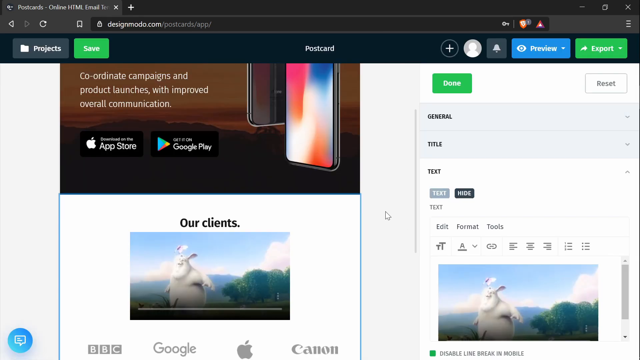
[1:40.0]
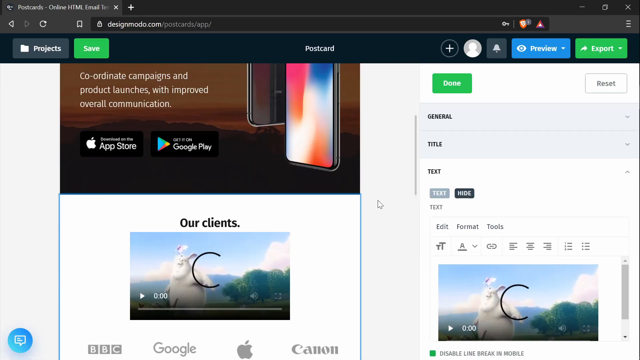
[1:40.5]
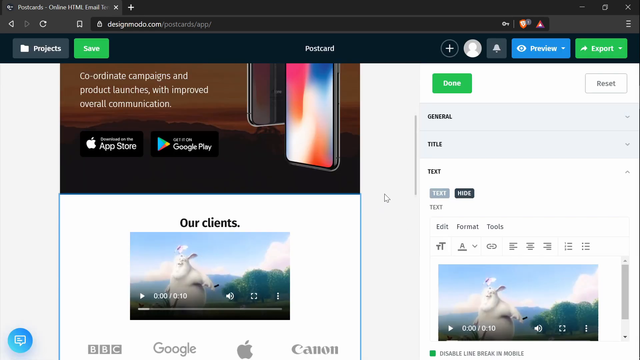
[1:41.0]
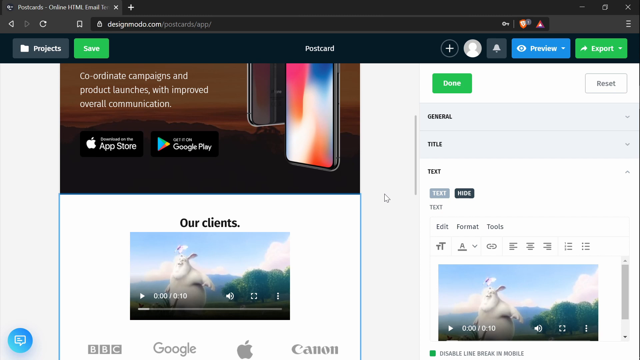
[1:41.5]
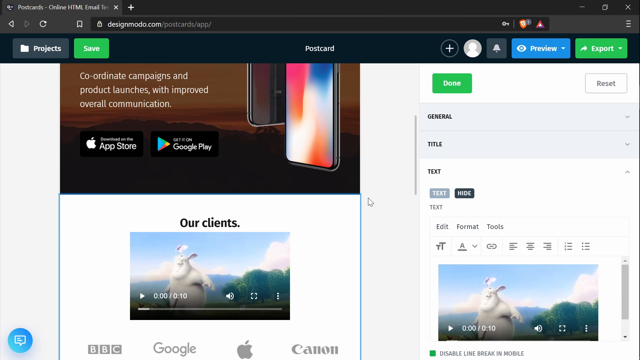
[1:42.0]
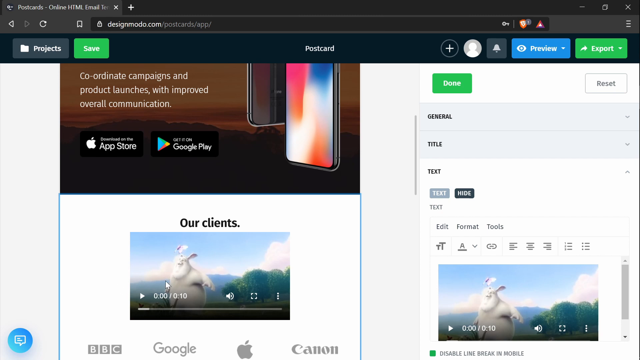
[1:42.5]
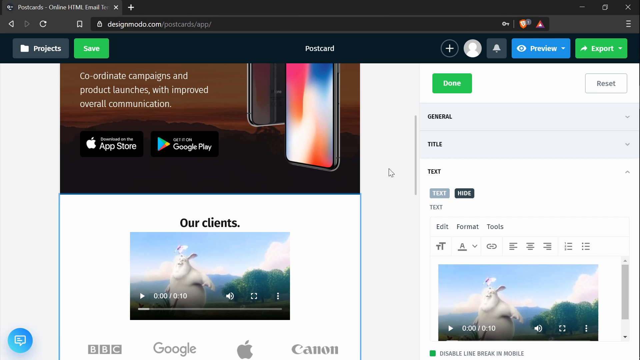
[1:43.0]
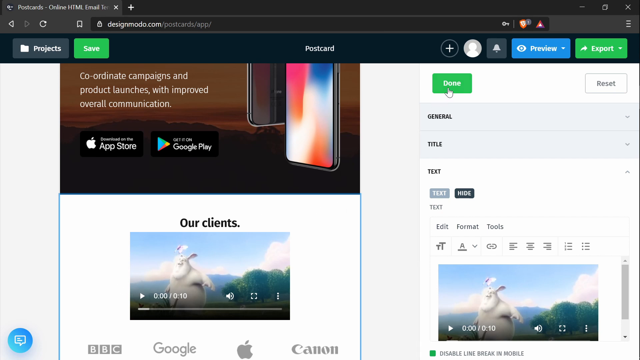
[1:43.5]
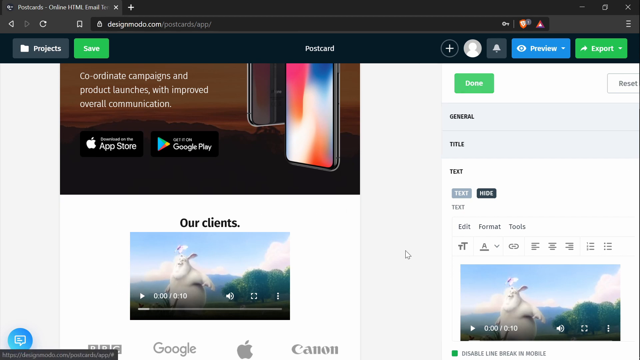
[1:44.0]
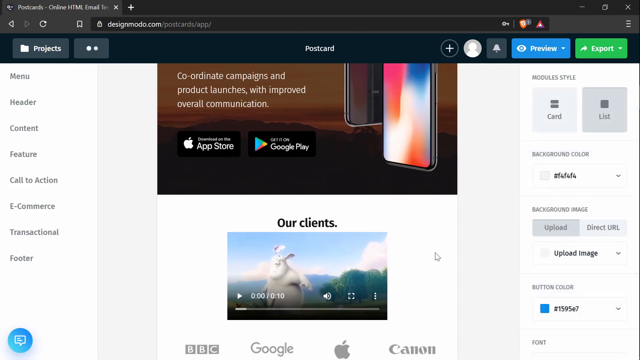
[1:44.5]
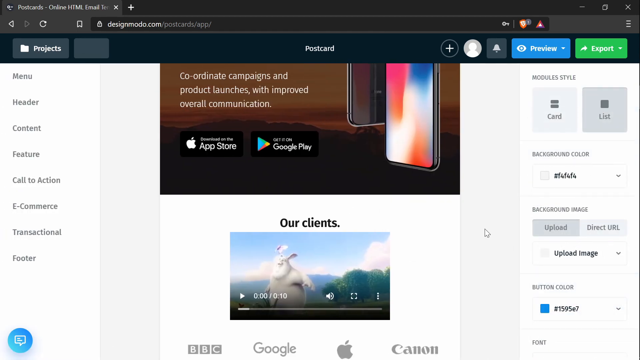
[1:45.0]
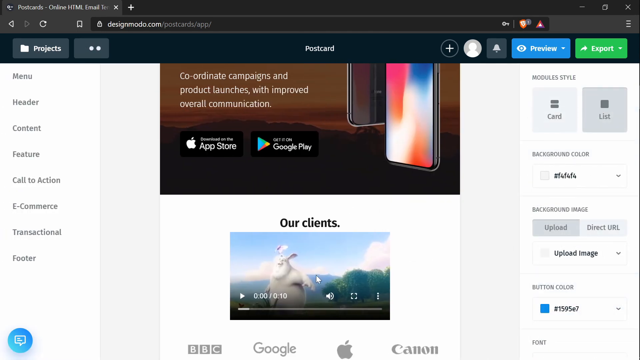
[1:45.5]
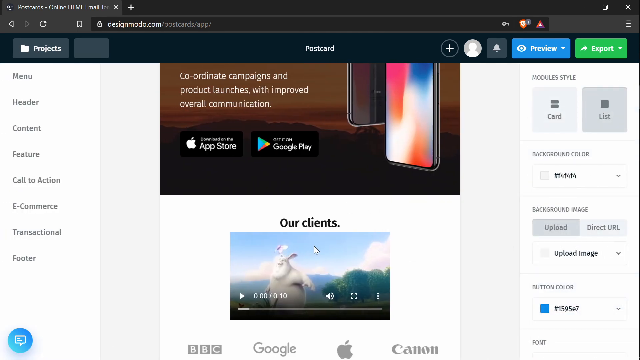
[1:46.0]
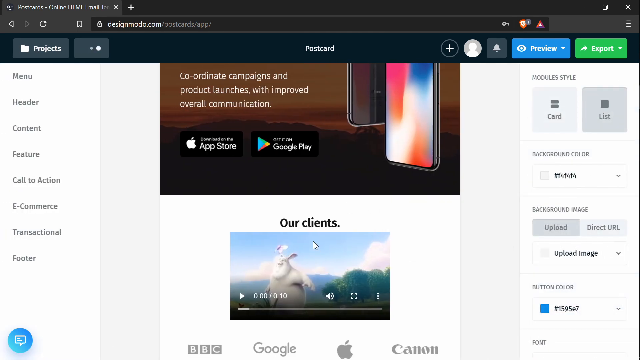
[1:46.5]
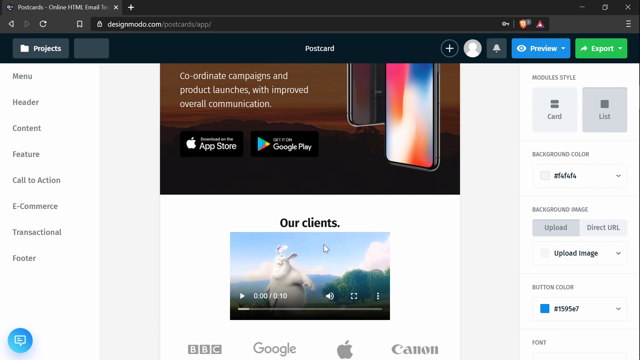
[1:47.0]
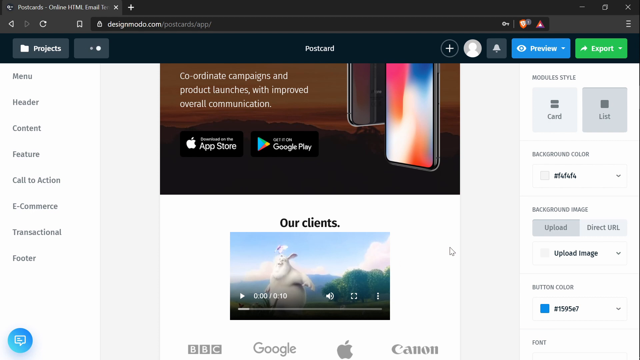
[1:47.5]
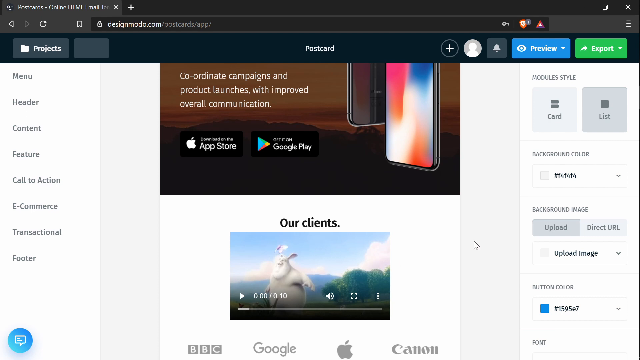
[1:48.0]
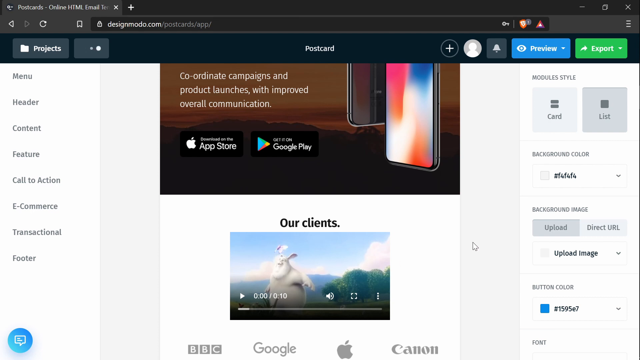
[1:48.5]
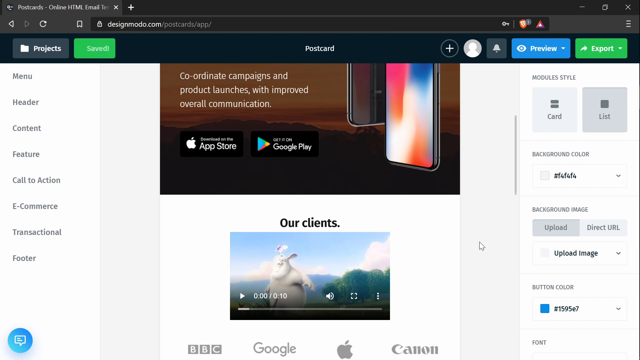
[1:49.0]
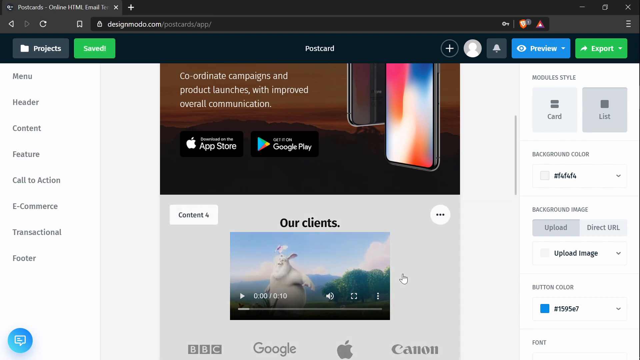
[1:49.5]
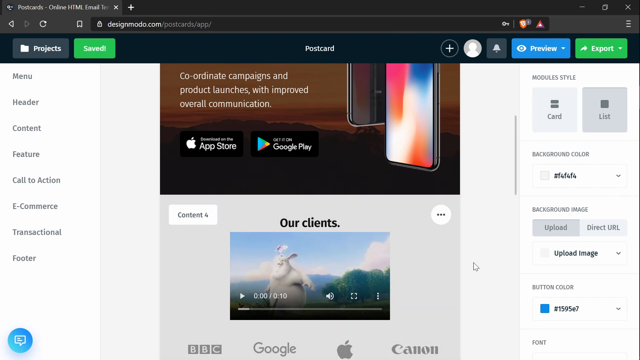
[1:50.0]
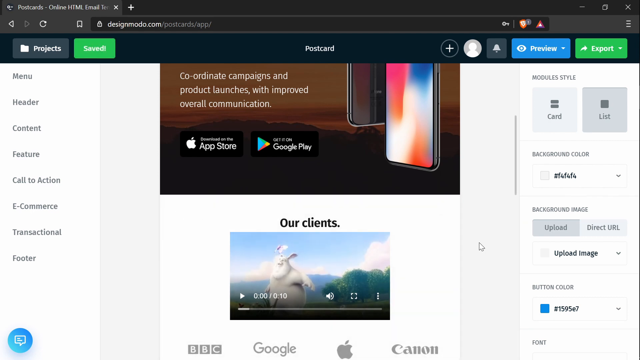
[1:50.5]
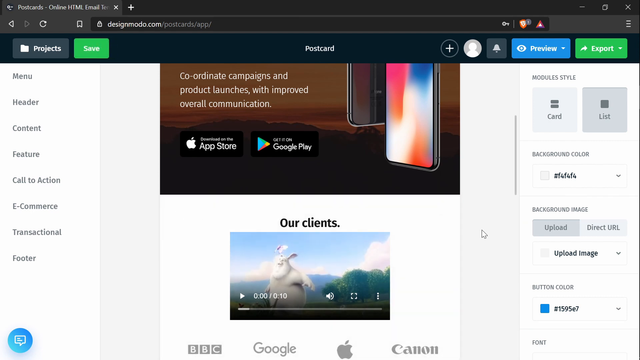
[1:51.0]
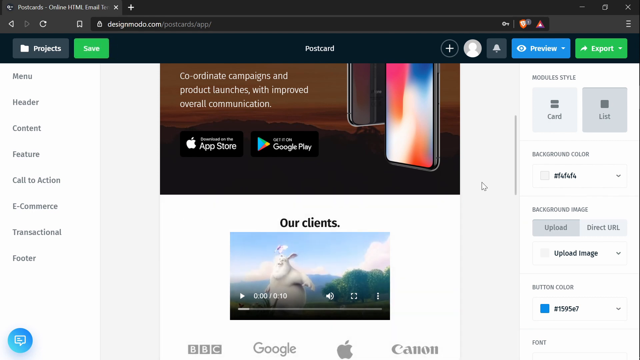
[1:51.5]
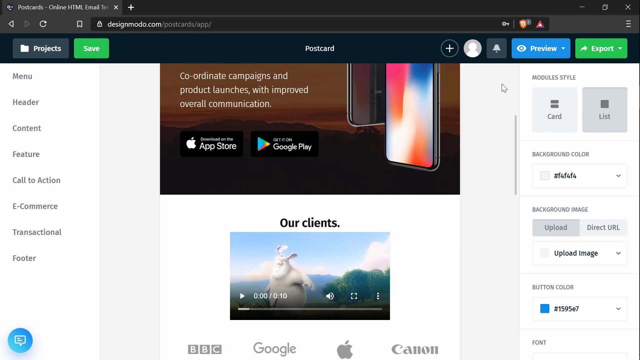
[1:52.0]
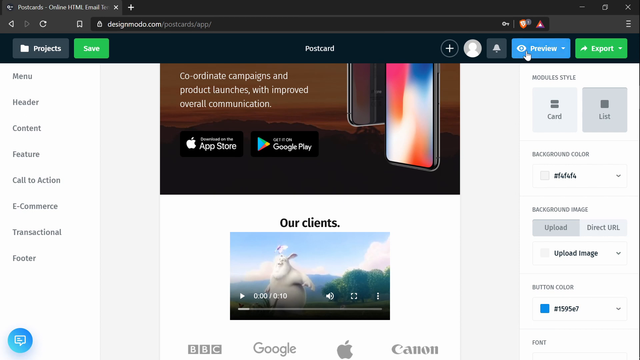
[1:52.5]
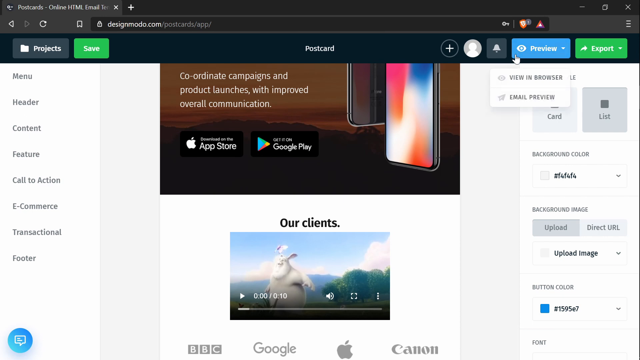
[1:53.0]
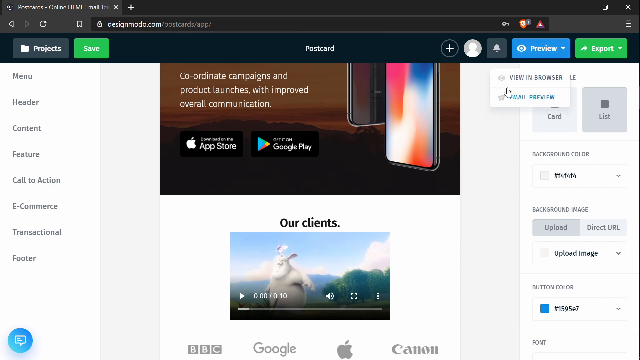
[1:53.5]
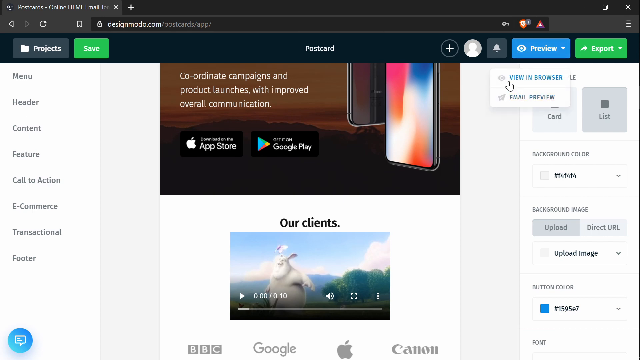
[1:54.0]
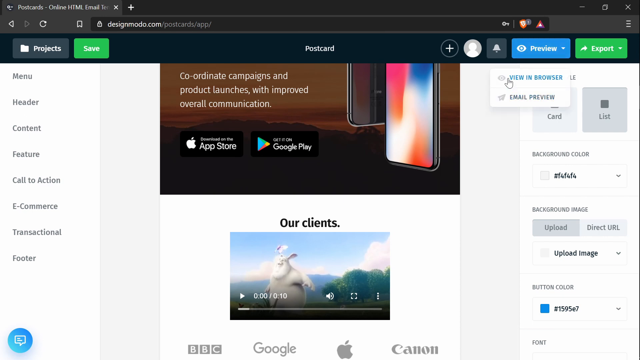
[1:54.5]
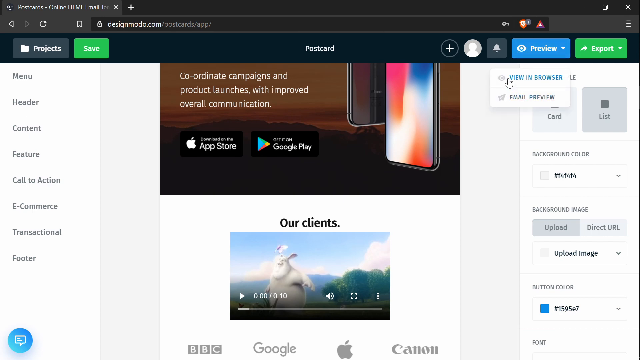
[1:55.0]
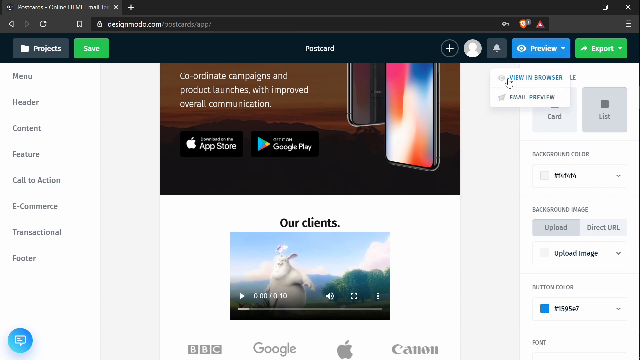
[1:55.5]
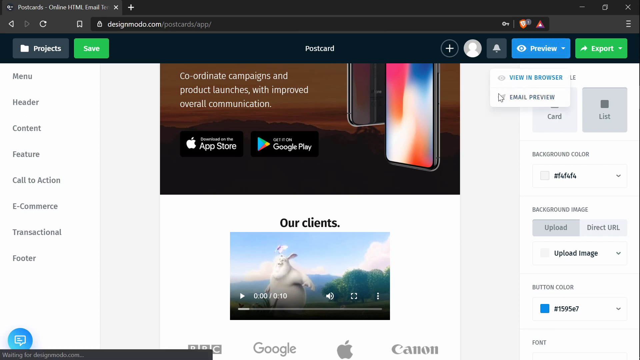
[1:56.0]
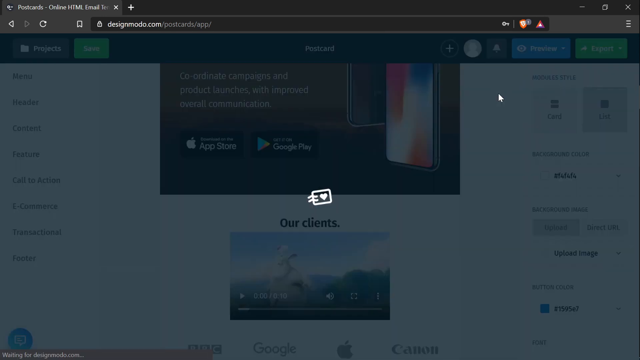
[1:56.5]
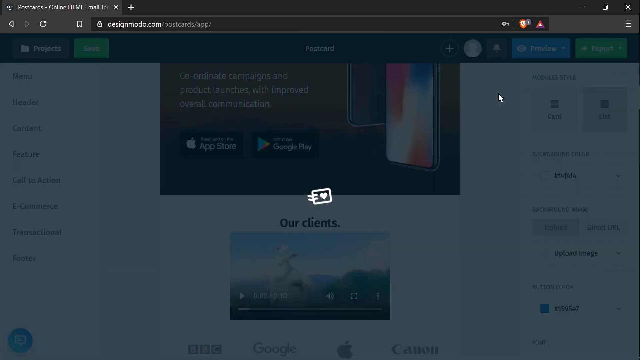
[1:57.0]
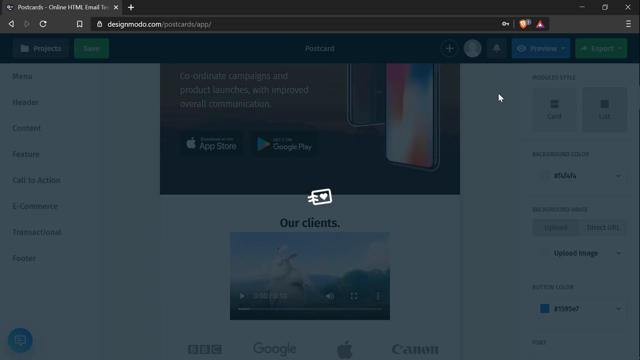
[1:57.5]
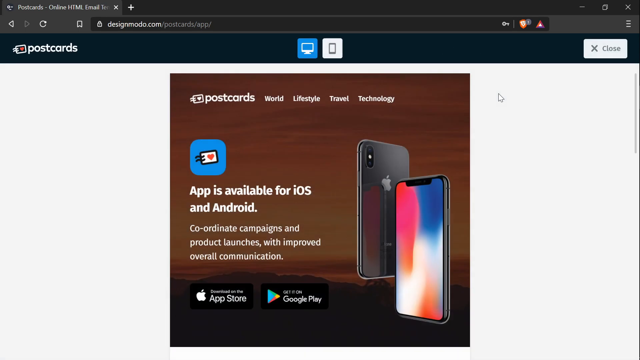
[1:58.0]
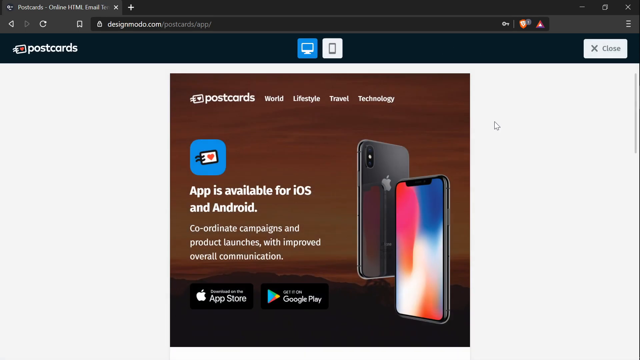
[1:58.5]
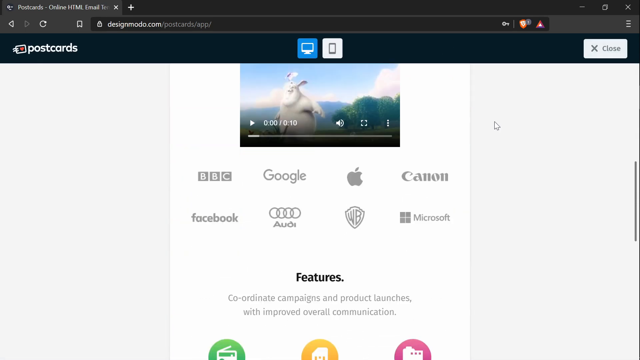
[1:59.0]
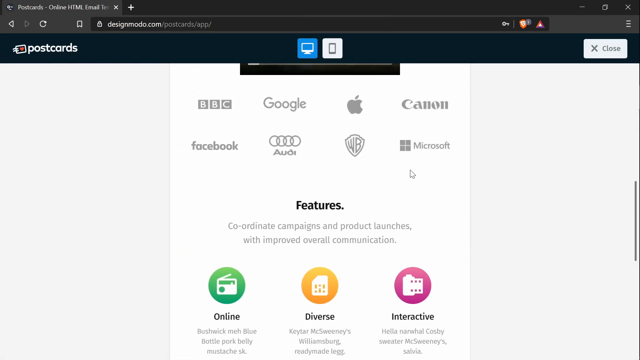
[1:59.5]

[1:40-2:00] The person goes back to the postcard page, where under "our clients" there is now a video of a large white rabbit, resulting from what was pasted into the text section. The person closes the right-hand window, and the left-hand menu reappears with the menu, header, content, feature, call to action, e-commerce, transactional and footer options. Under "our clients" there is now just the video with no other text. The person hovers over preview in the top right corner, which has a blue background, and two drop-down options appear: view in browser and email preview. They click view in browser, and the Postcards logo appears in the middle of the screen with everything else blurred out before the main page returns with the main Postcards advert at the top. Scrolling down shows the our clients section with the video of the rabbit.